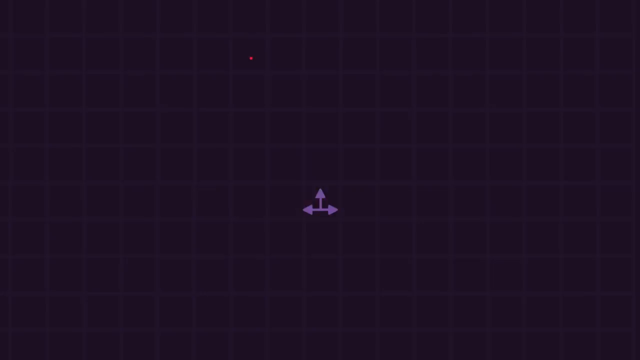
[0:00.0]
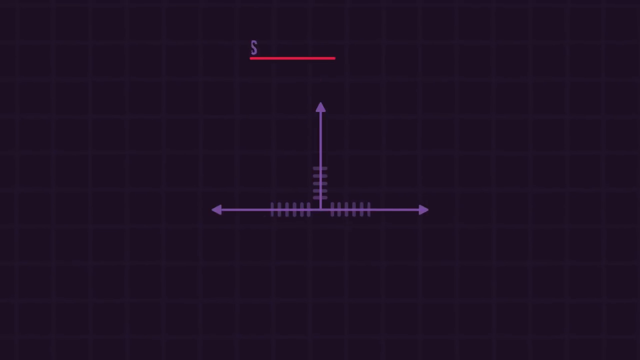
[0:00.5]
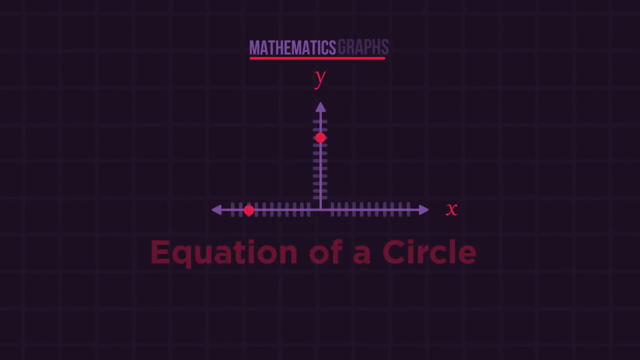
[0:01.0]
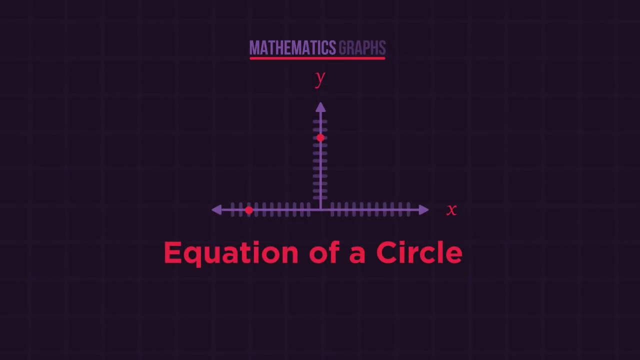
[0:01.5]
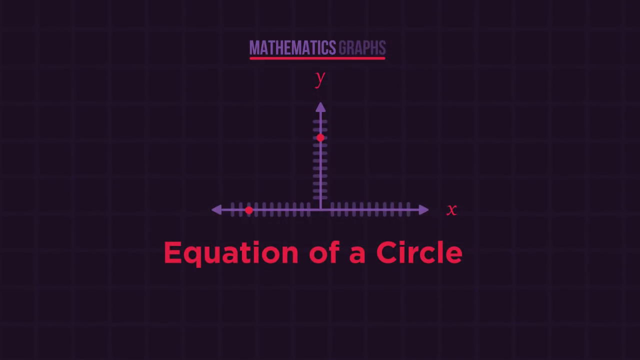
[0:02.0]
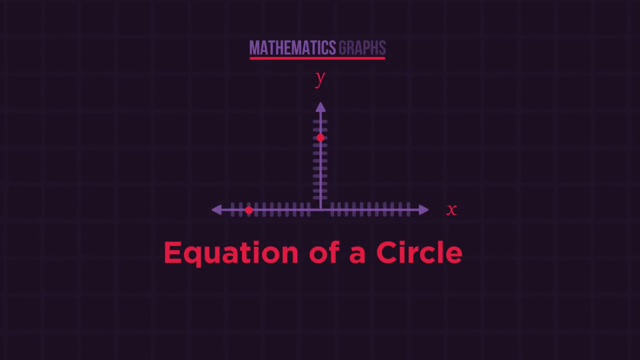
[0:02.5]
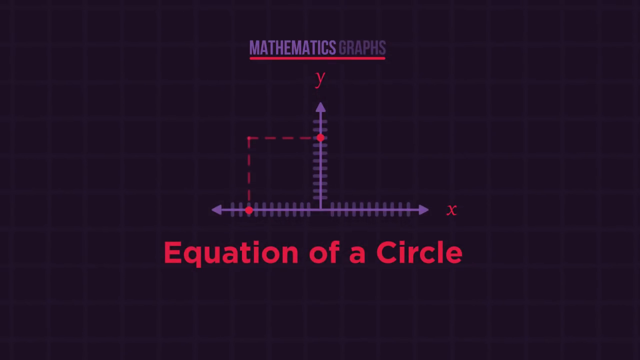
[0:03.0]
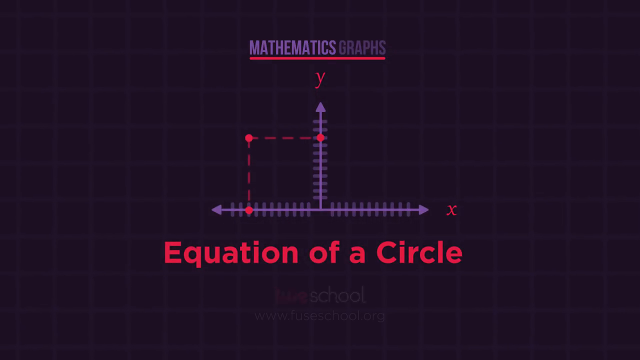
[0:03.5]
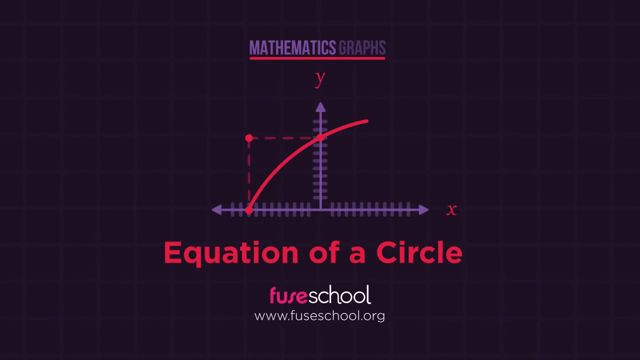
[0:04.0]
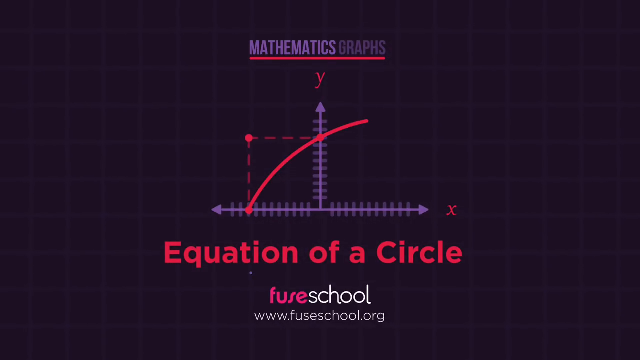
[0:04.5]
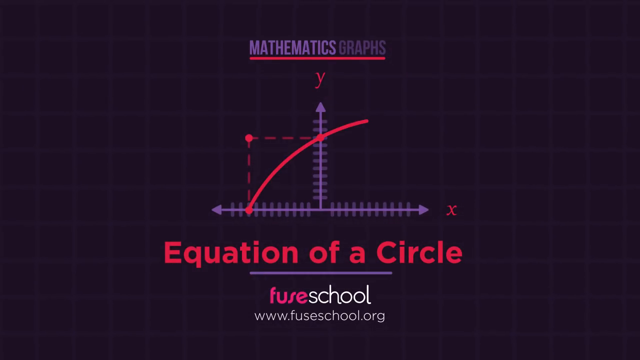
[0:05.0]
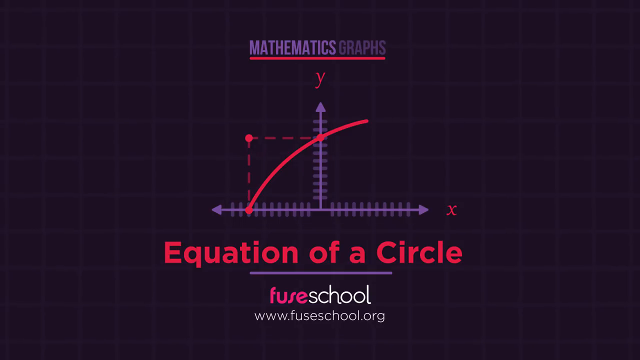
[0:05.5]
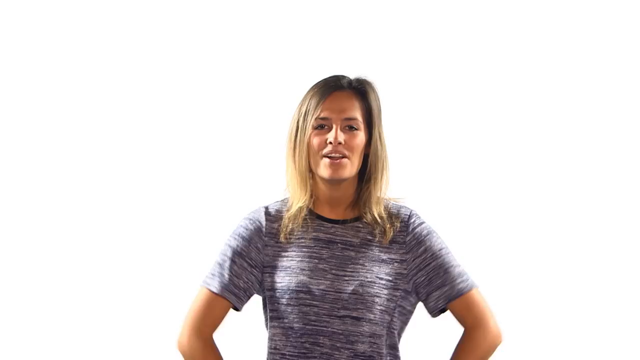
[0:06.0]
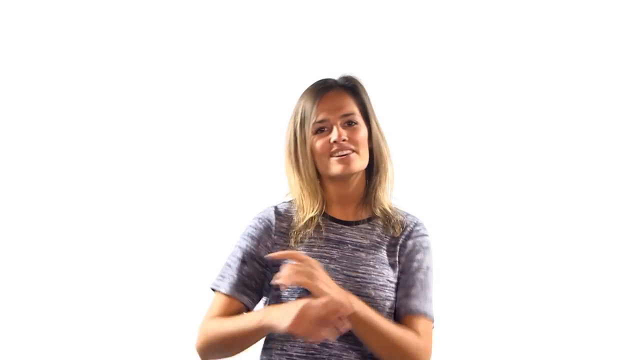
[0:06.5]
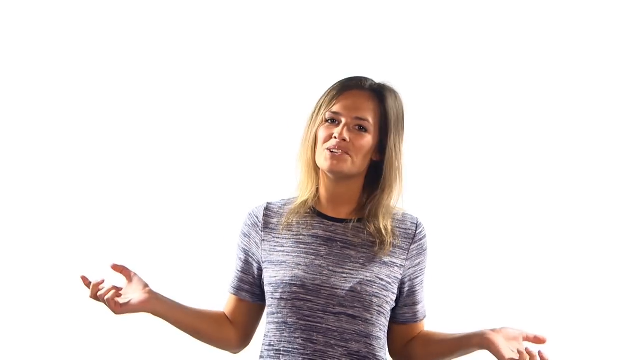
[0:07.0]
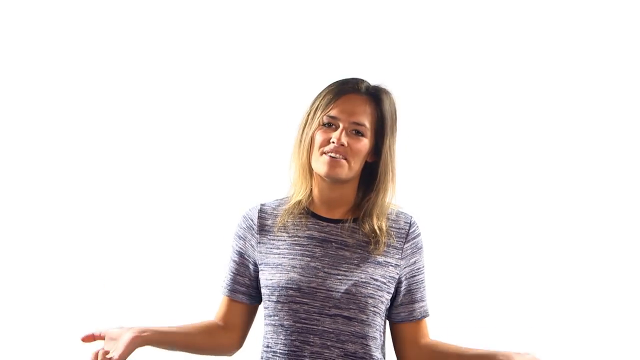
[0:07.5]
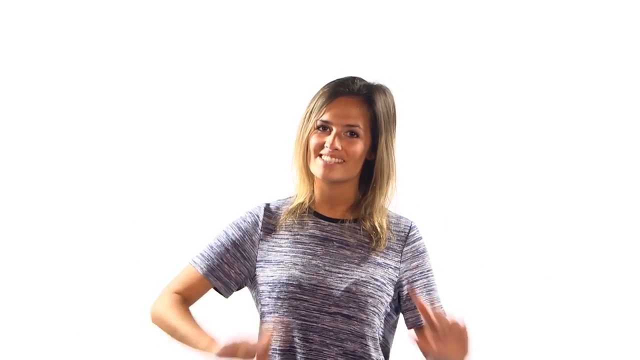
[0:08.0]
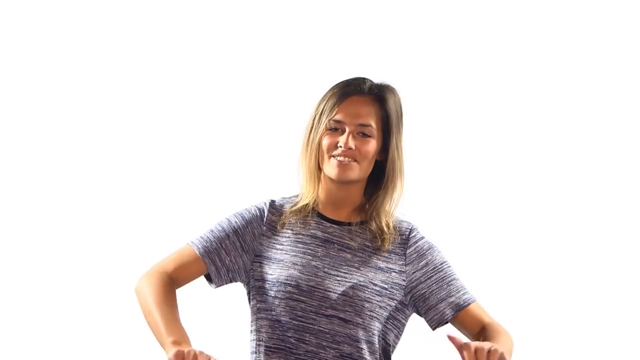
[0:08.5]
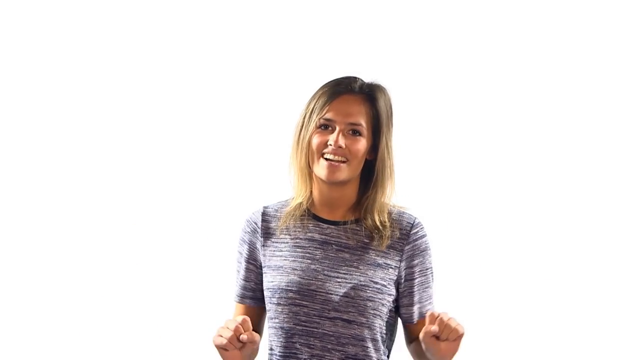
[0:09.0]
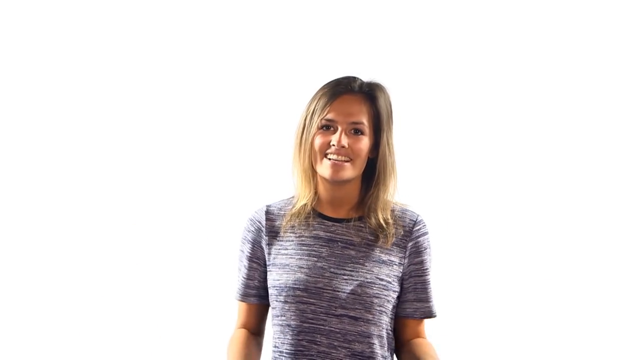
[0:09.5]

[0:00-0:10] A black screen appears, seemingly a math problem being done or the intro to one. Purple text with a red underline reads "mathematics graphs", and a graph with a y-axis and an x-axis appears. The graph's lines, the y-axis and x-axis, are purple, and there are two red points on them, one on the y-axis and one on the x-axis. The background is completely black, and below the graph, red lettering reads "equation of a circle". The points then combine on the graph with another red point to make a square shape. Below that is a logo reading "Fuse School" and a web address, "www.fuseschool.org". A woman then comes on screen and makes a wide sweeping movement with her arms. She wears a black and white striped shirt, has brown hair and a tan, and is wearing makeup. She makes sweeping movements in a circle with her hands.